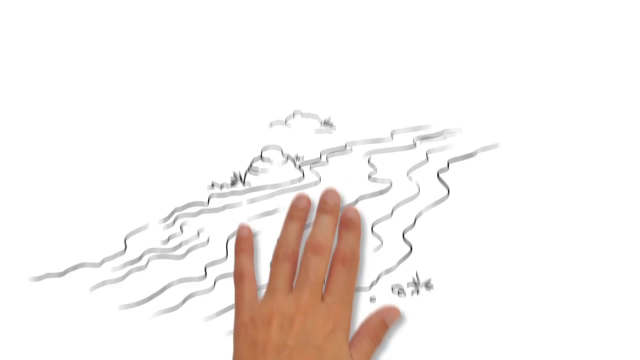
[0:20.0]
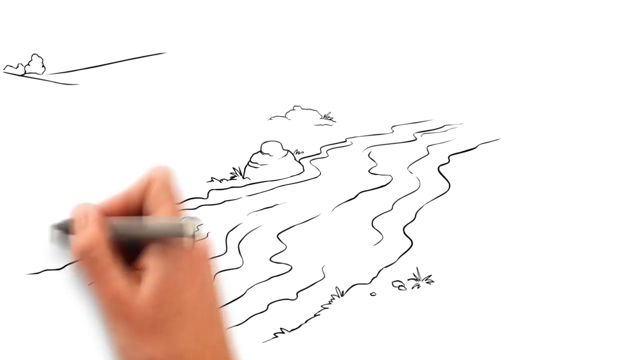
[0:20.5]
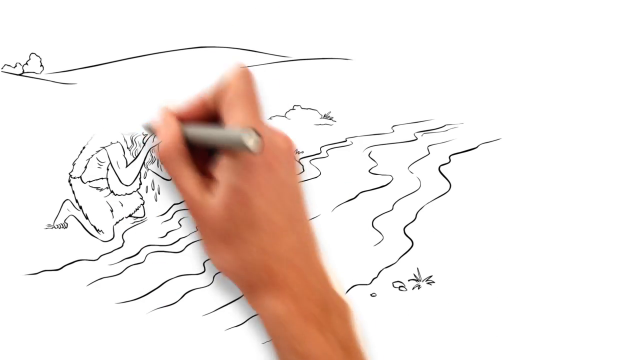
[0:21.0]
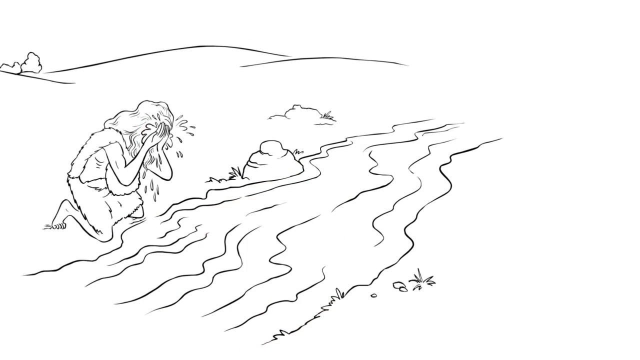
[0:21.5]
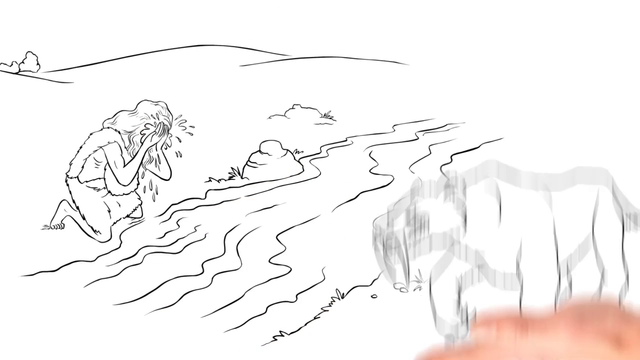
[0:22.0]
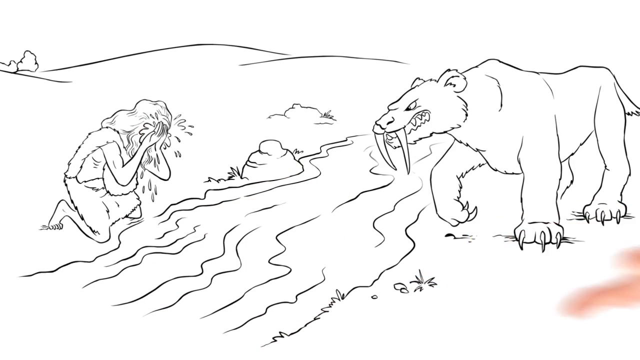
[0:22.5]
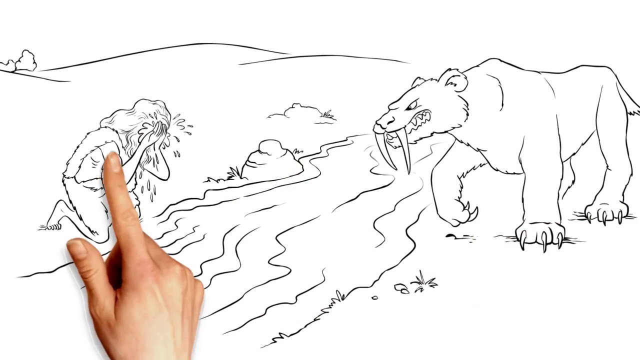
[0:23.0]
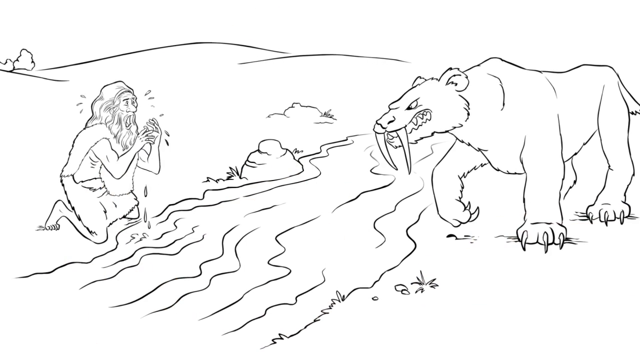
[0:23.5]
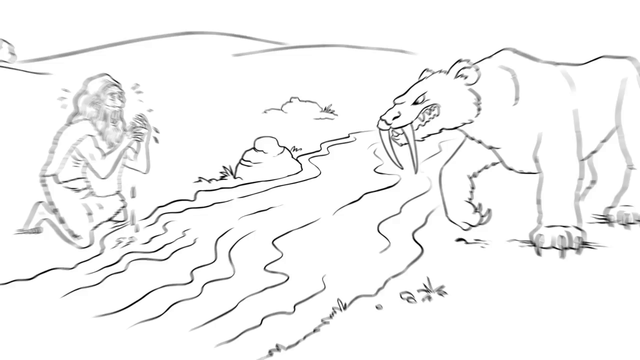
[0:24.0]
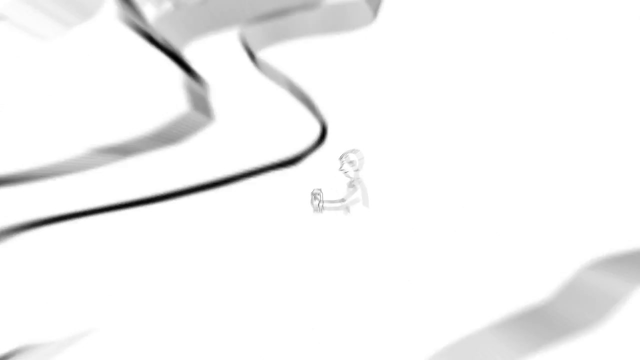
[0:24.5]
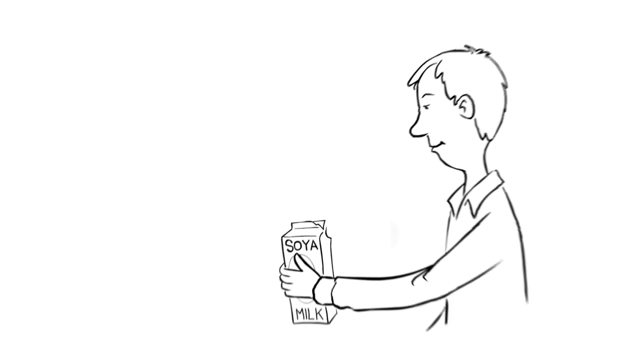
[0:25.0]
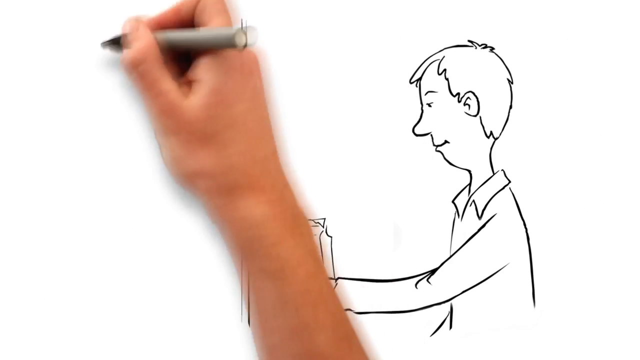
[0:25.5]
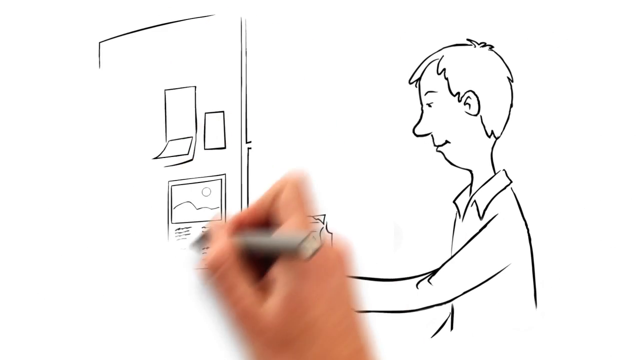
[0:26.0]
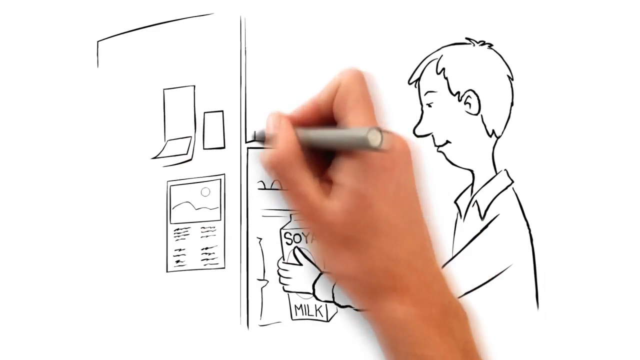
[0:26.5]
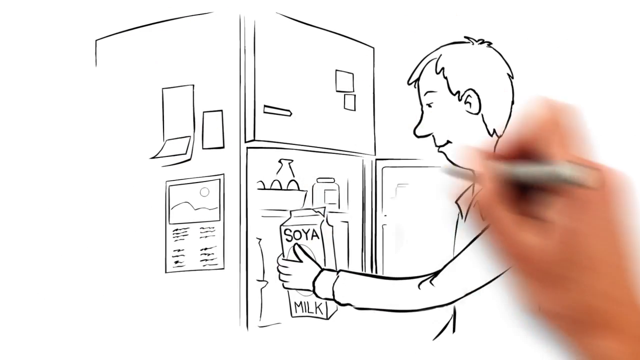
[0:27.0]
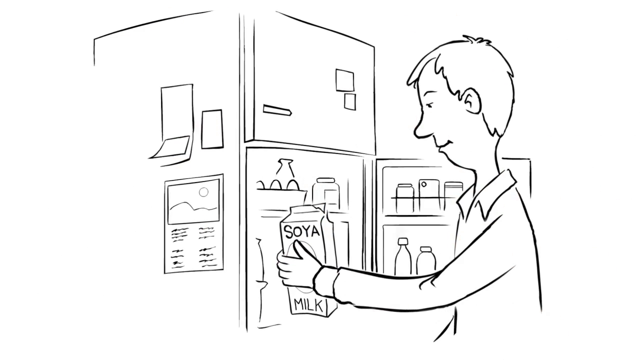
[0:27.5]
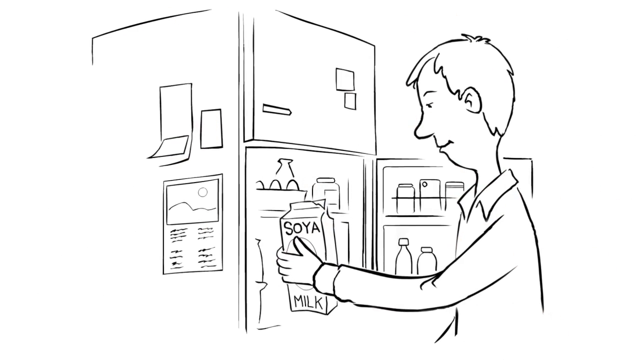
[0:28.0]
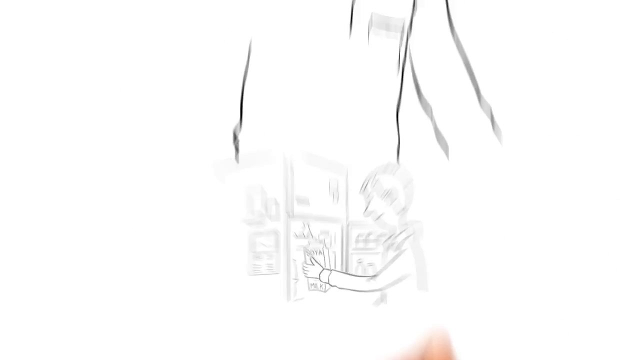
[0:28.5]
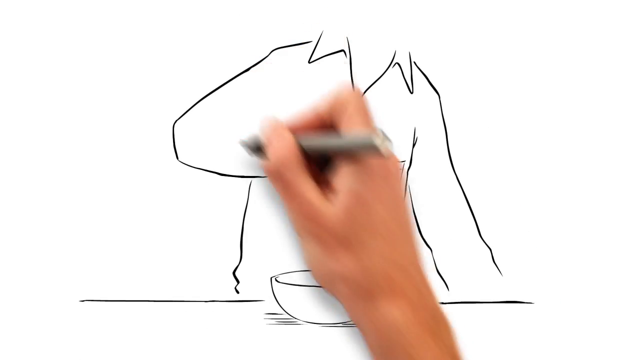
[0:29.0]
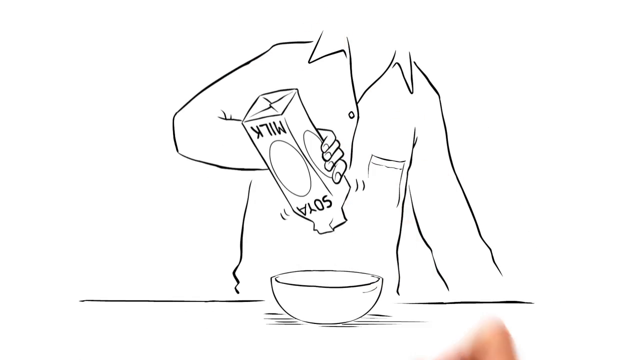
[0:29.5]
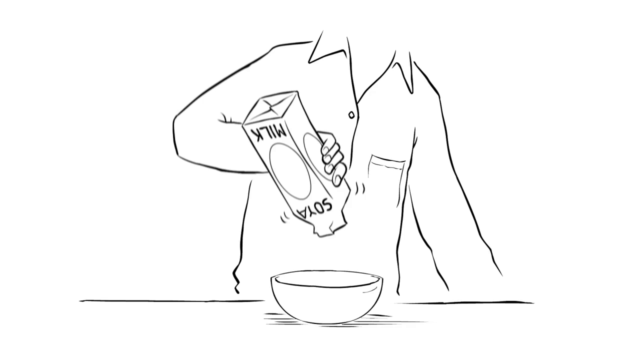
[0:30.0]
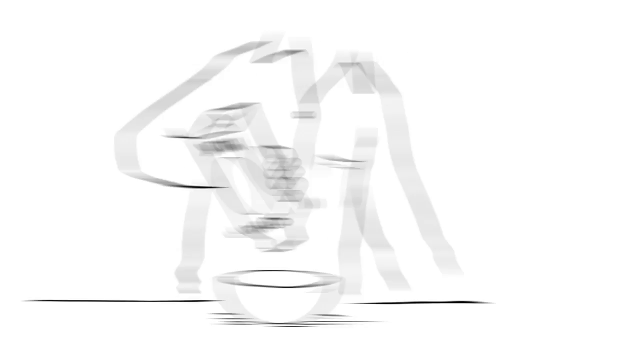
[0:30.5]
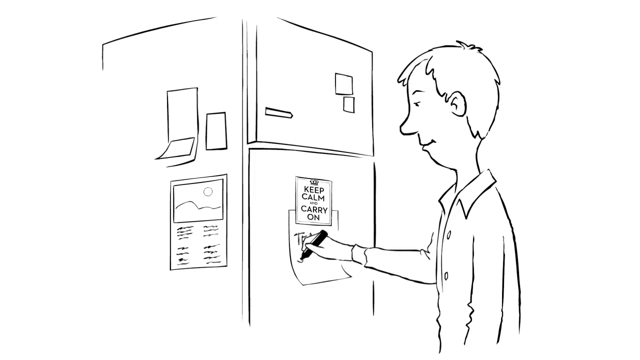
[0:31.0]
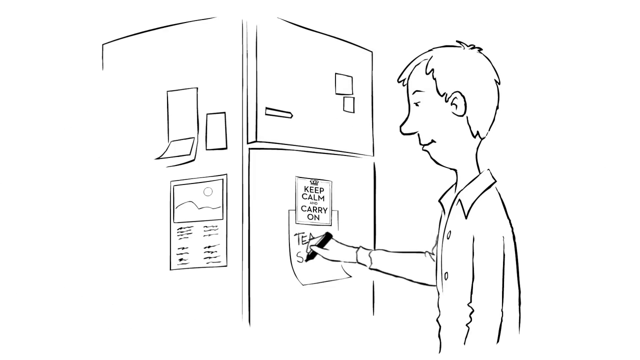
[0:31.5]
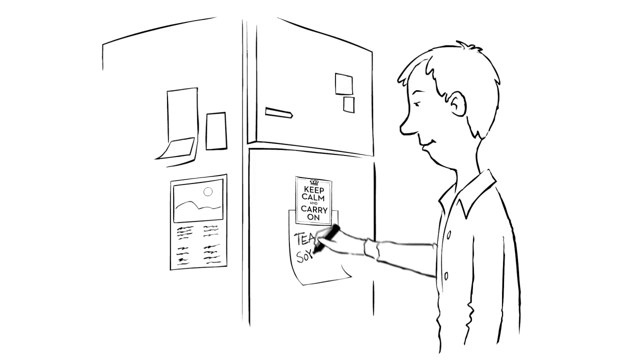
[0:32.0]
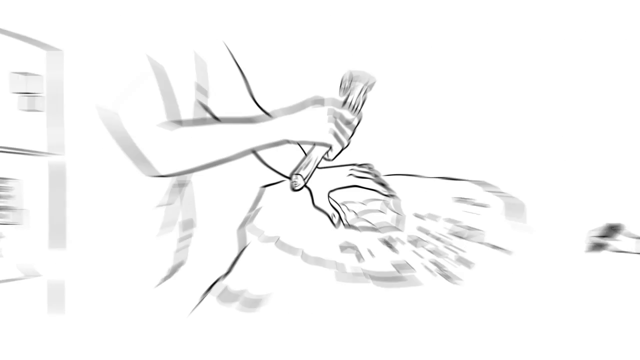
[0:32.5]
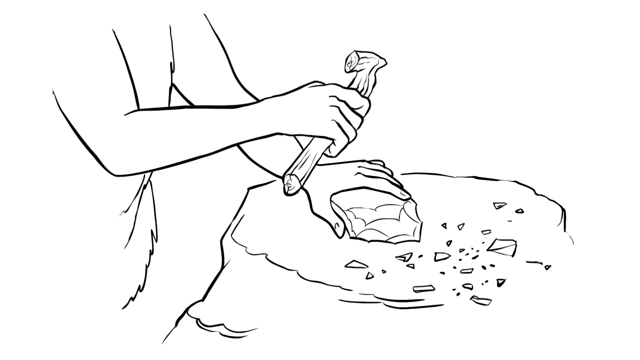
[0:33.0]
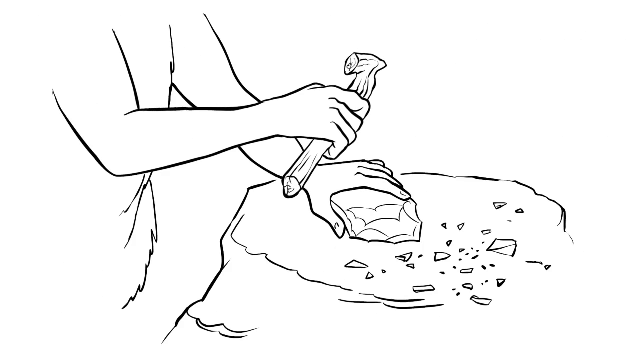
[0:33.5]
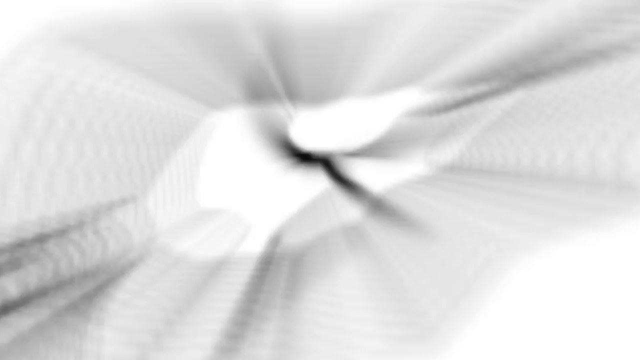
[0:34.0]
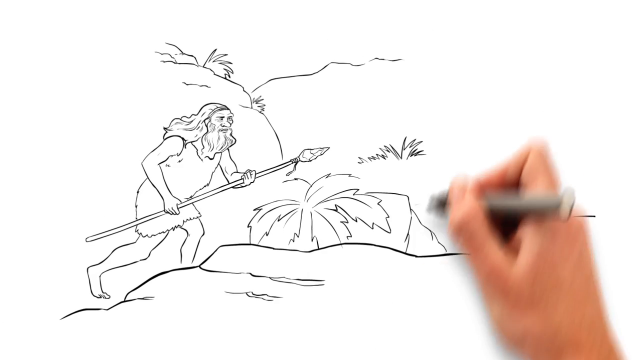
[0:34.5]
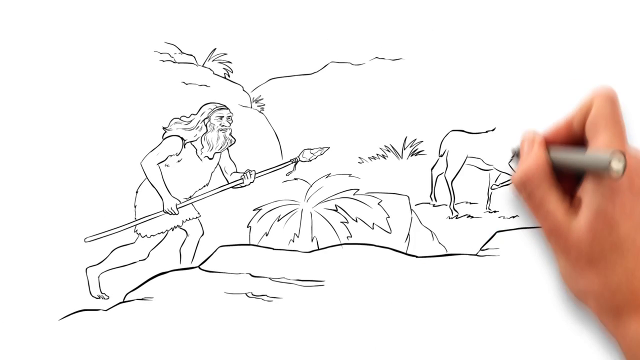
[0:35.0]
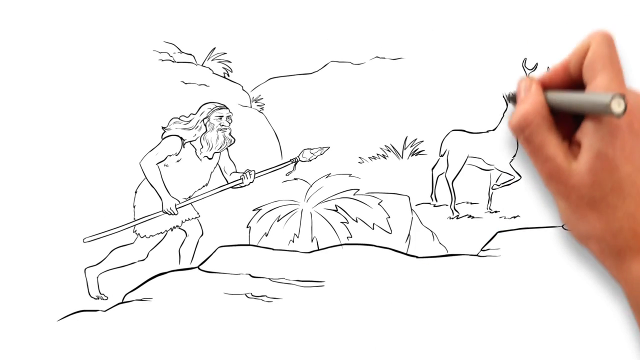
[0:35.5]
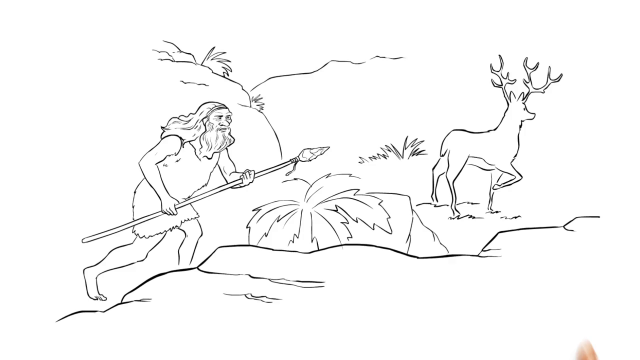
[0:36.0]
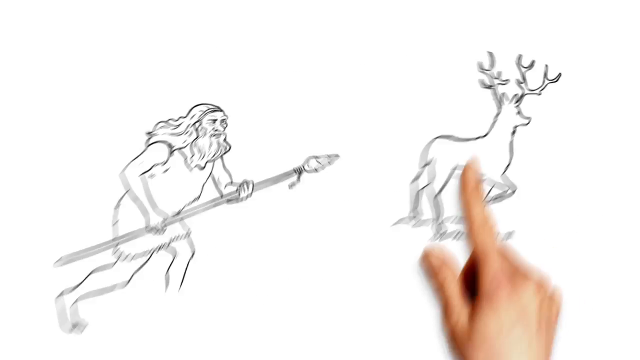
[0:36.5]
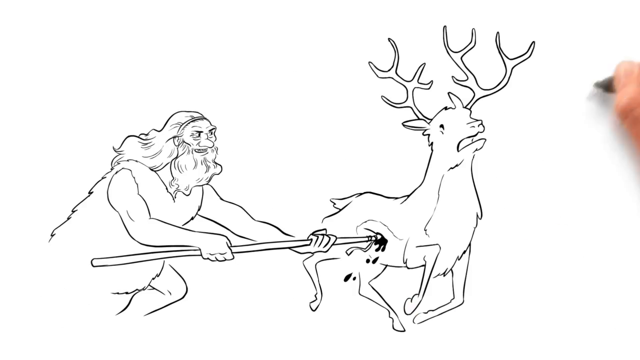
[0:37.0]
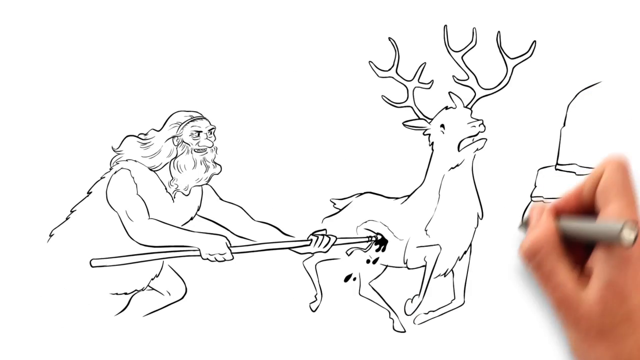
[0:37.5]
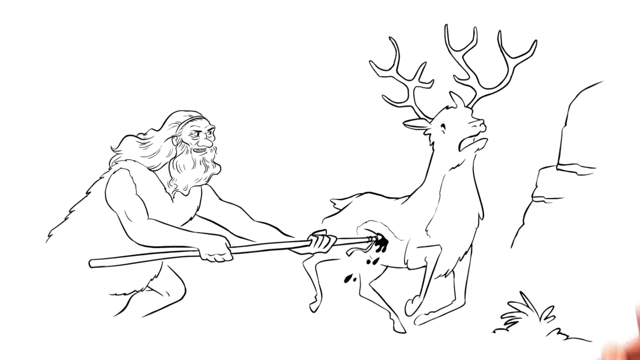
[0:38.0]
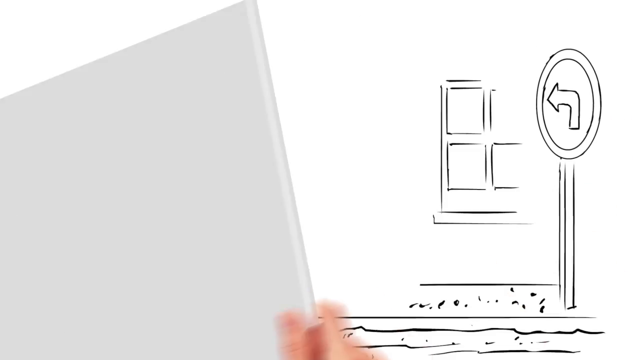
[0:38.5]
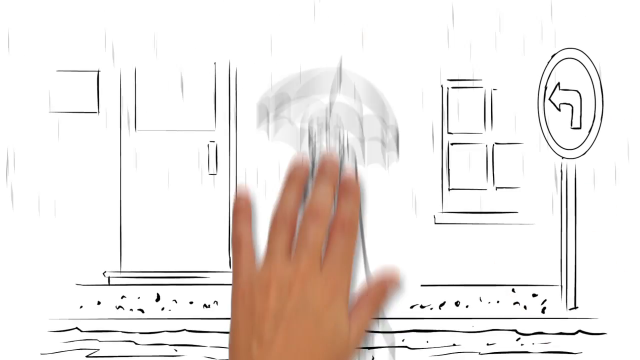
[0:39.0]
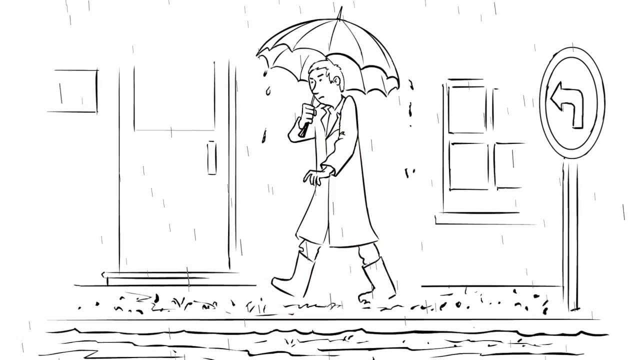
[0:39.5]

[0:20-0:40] A cartoon drawing of what looks like a river appears, followed by a figure kneeling next to it who seems to be a caveman, apparently wearing fur, with long hair and a beard, and seemingly washing his face in the river. On the other side of the river, what looks like a saber-toothed cat looks on. The human figure on the left looks up at the saber-toothed cat and looks very surprised. Next, the more modern man appears to be looking in his refrigerator and pulls out a carton of soy milk. He tries to pour it into a bowl, but it looks empty, and he writes a shopping list and puts it on the refrigerator. A close-up cartoon shows what looks like a caveman making tools, apparently chiseling rocks into the shape of a spear. The caveman then chases what looks like an elk or a deer and stabs it with a spear, hunting.